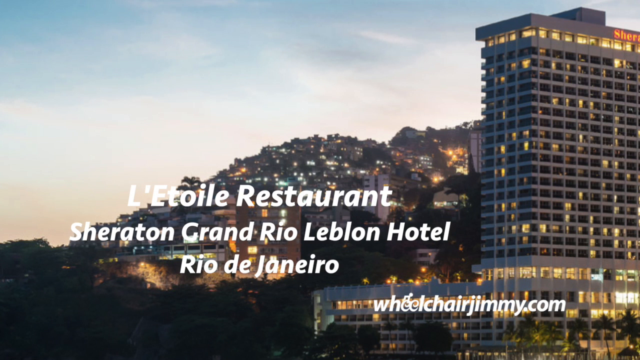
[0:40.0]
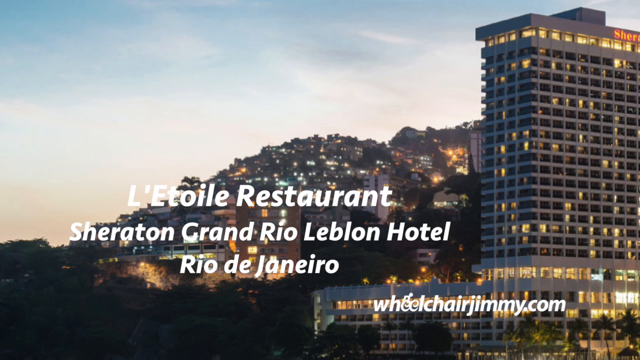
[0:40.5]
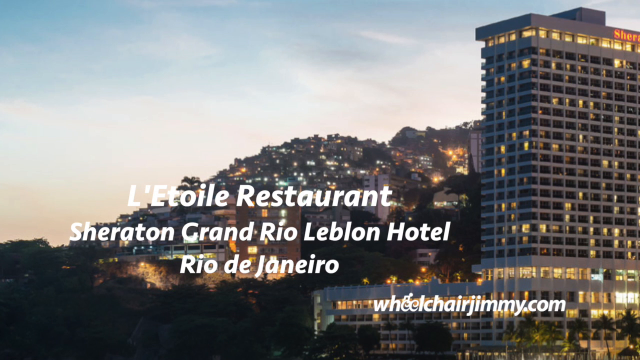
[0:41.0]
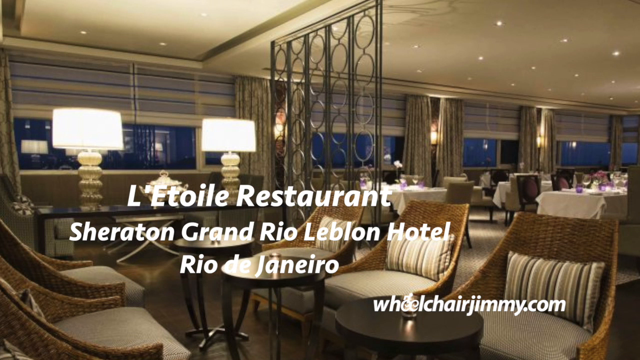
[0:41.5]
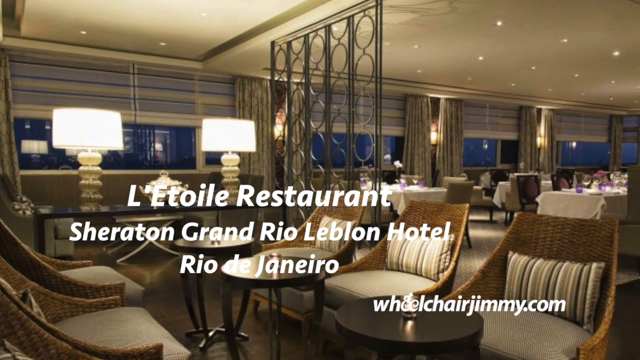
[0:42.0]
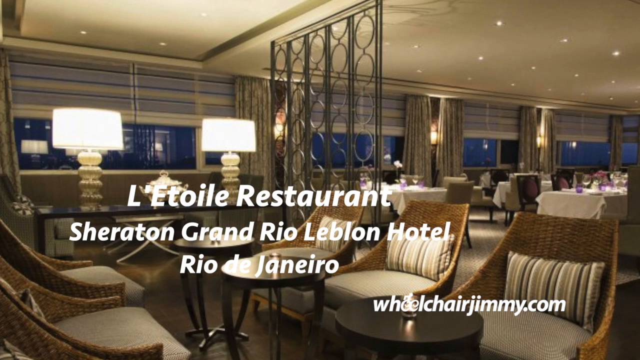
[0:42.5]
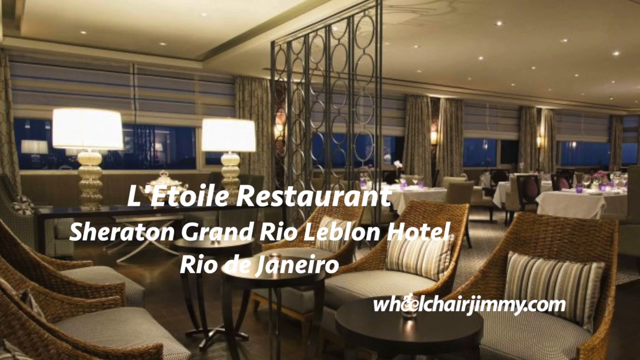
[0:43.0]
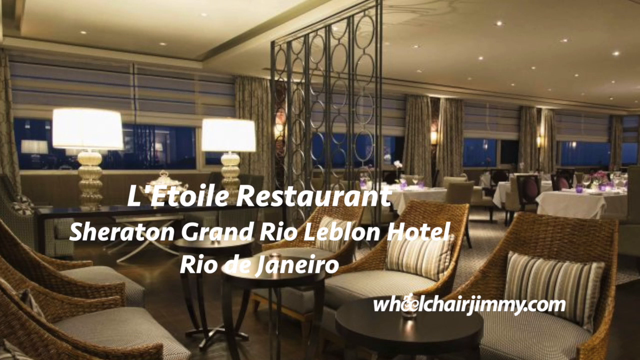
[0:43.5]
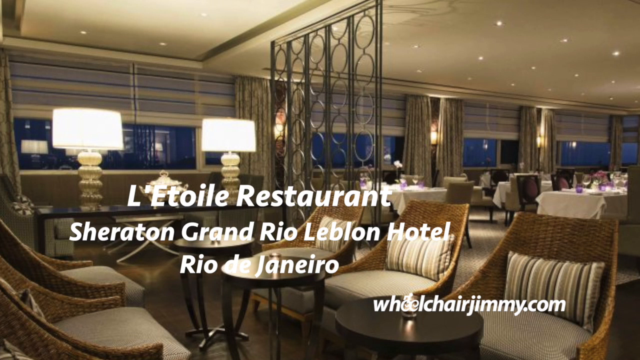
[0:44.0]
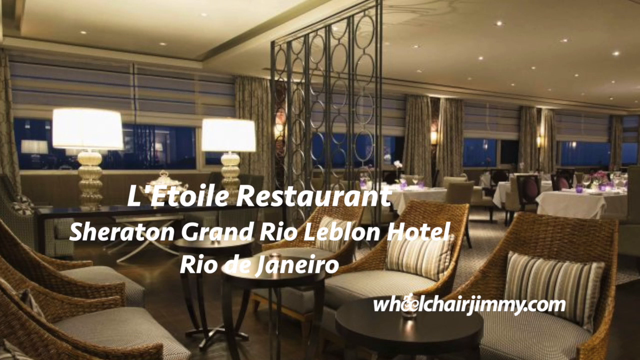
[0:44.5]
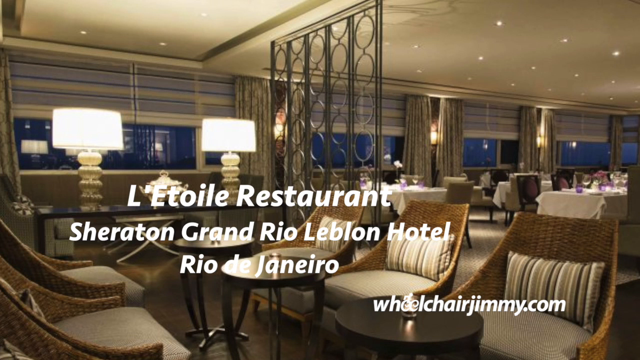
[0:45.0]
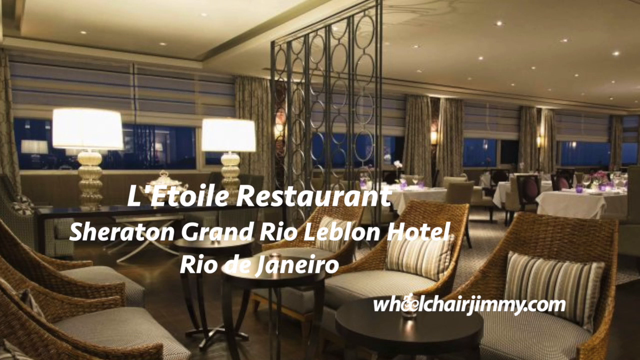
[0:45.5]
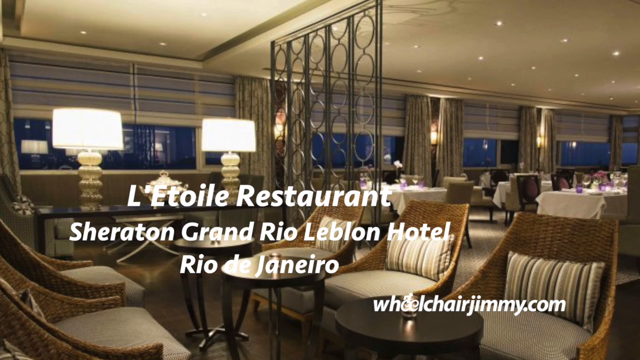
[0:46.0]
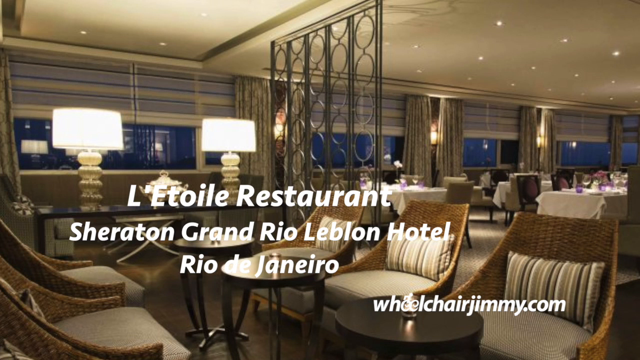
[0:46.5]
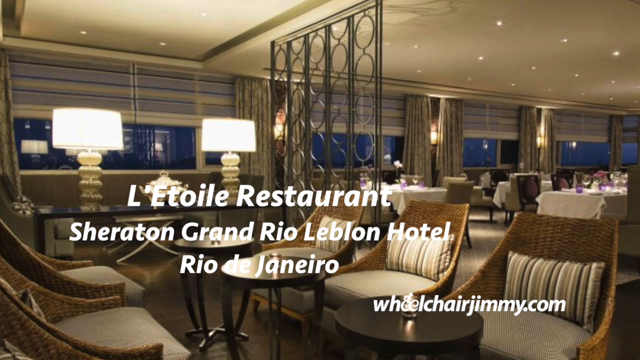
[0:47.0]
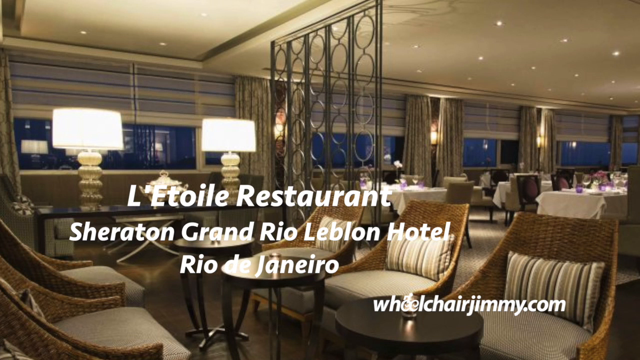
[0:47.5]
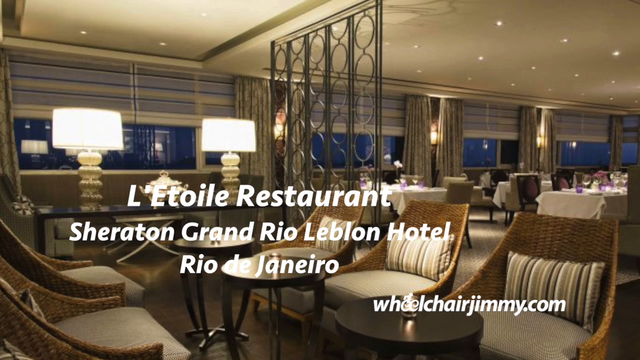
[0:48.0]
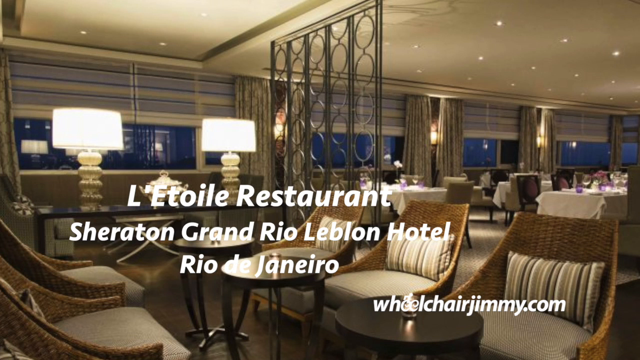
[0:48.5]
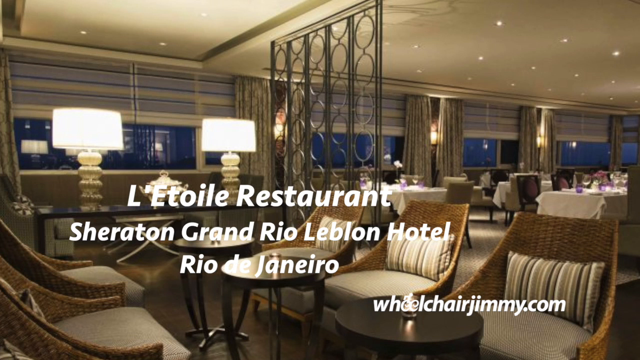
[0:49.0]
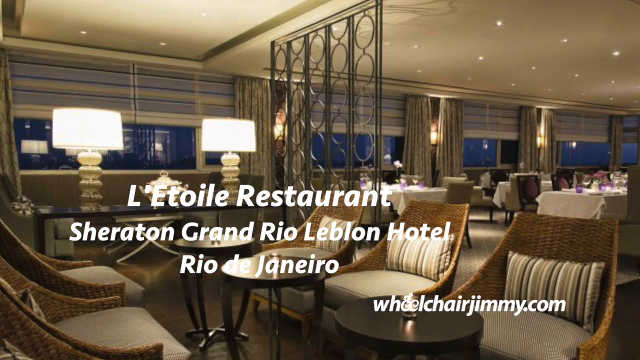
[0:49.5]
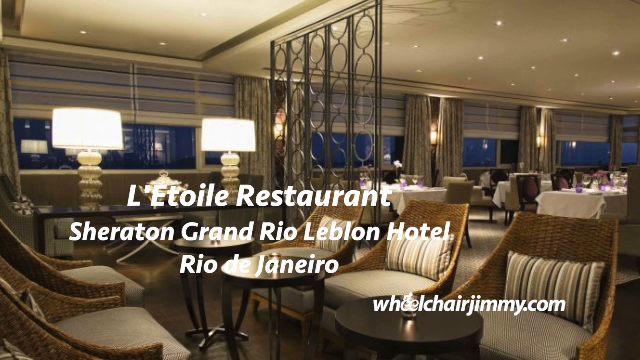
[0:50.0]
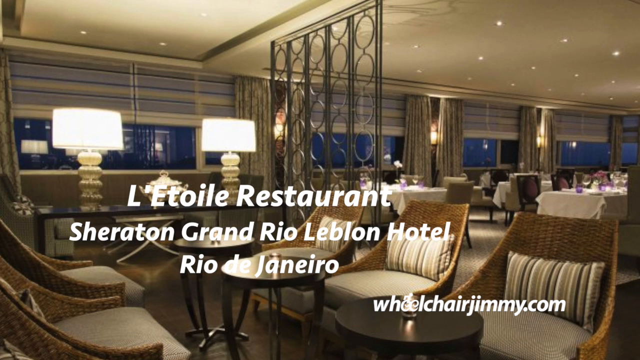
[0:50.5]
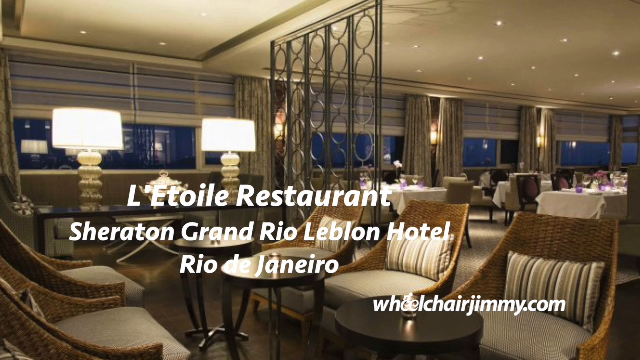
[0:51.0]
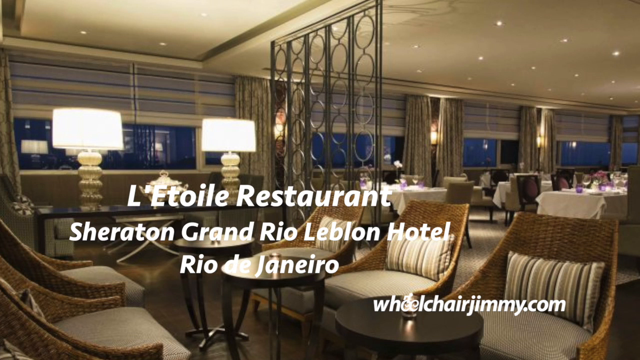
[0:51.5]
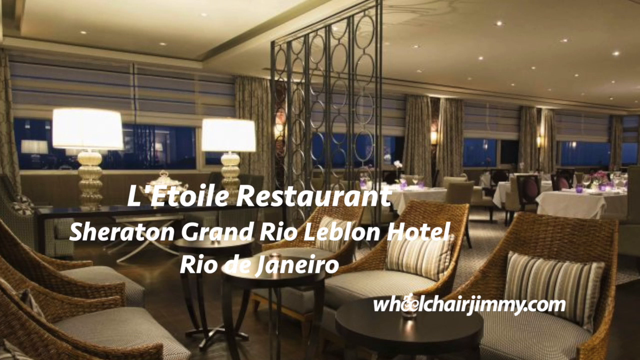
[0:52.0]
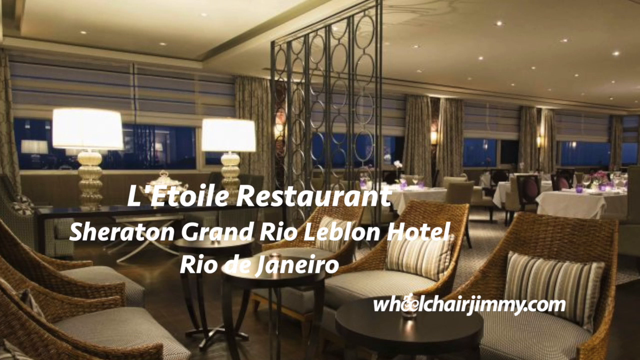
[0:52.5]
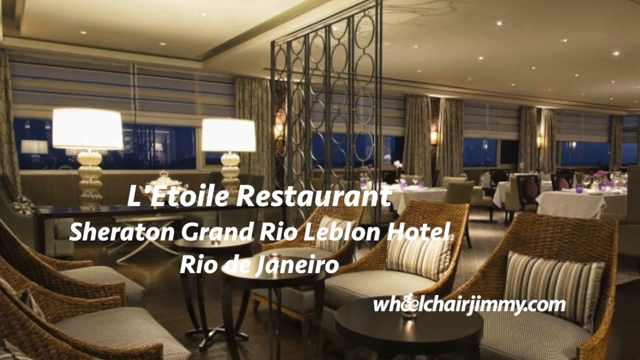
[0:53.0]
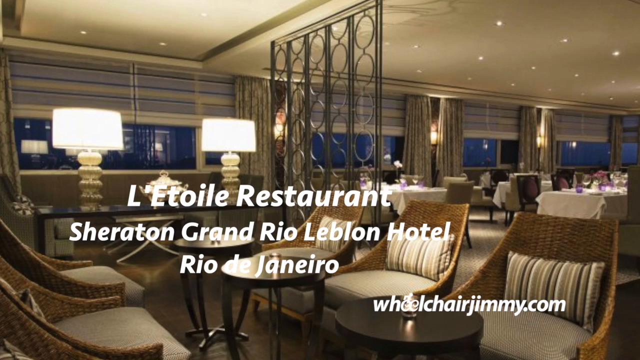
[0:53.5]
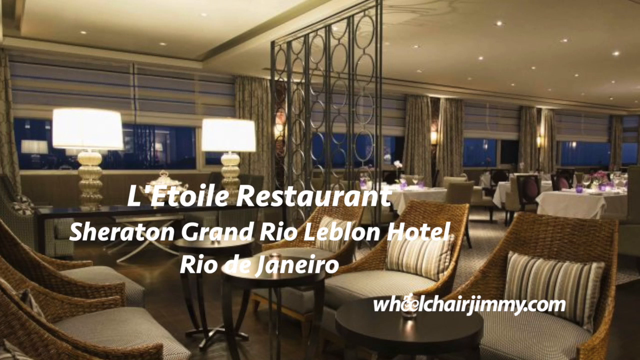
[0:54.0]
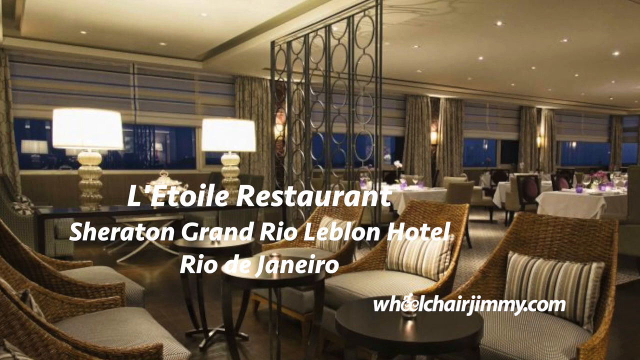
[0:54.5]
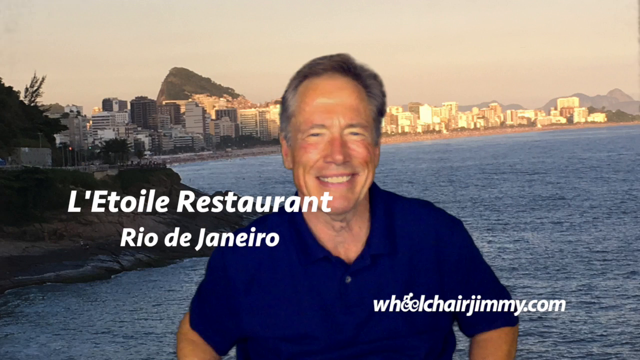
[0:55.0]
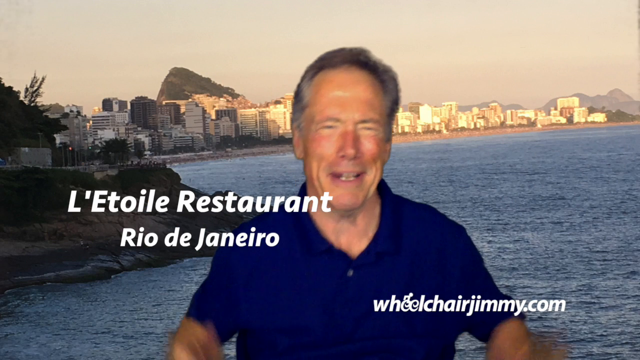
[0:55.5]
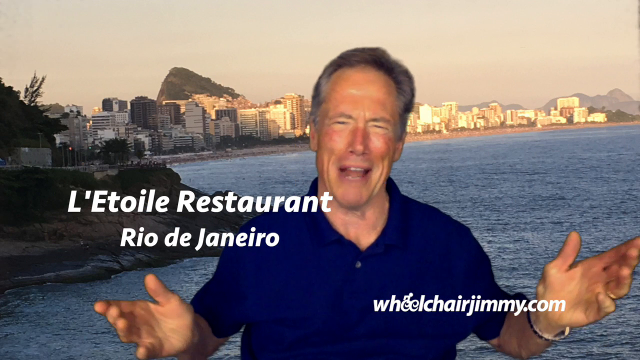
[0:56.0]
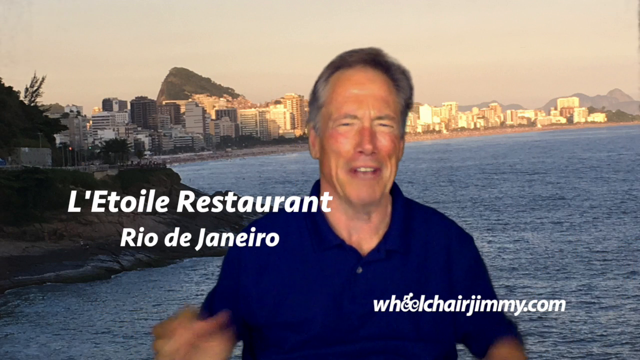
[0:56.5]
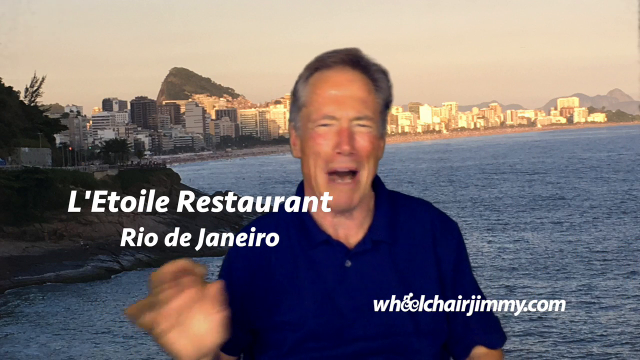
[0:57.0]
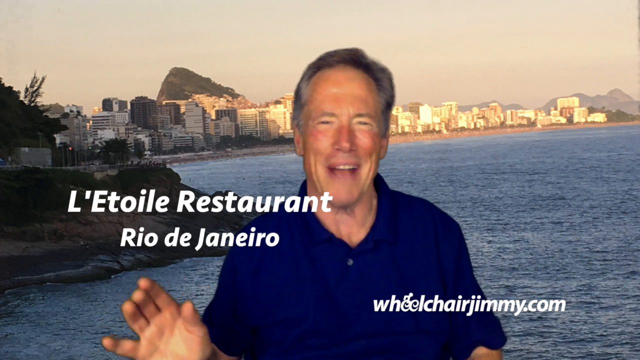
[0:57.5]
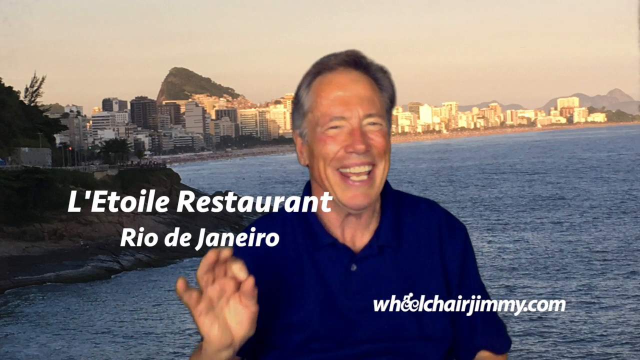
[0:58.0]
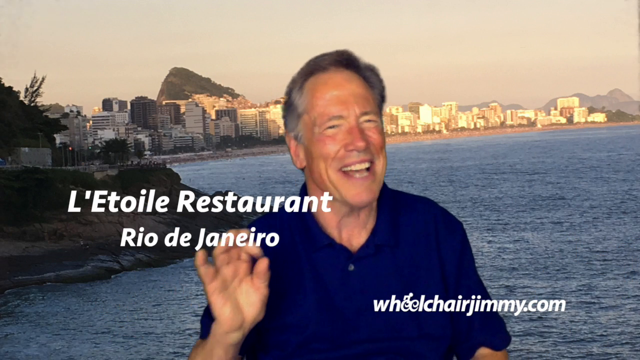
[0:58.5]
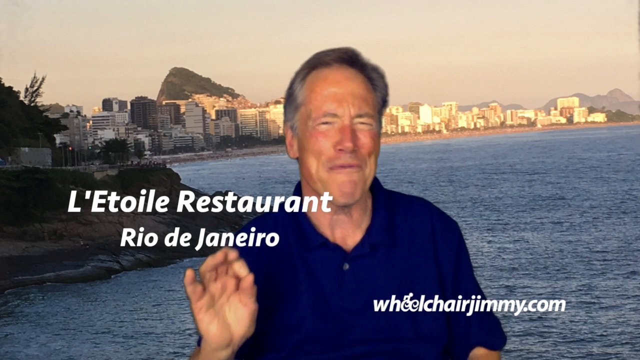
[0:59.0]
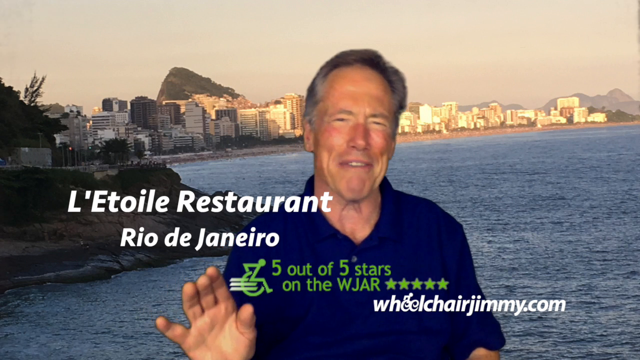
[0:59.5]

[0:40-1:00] The image of the Sheraton Hotel remains on the right-hand side of the frame, with the hillside of lit-up houses behind the on-screen words, which read "L'Etoile Restaurant, Sheraton Grand Rio Leblon Hotel, Rio de Janeiro." In the bottom right corner it says "wheelchairjimmy.com." The image changes while the writing remains, now showing what appears to be a restaurant. Tables and chairs are in the right-hand background, and in the foreground are some wicker chairs with little tables. Some kind of decorative tower, which looks like it is made of metal, is in the middle between these chairs and the tables. There are also several lamps in the room, mostly on the left-hand side of the frame. The video then returns to the man from the beginning, in his navy blue shirt, who is speaking and using his hands a lot. Text appears on screen saying the restaurant gets "5 out of 5 stars on the WJAR," with a little image of a moving wheelchair next to it.